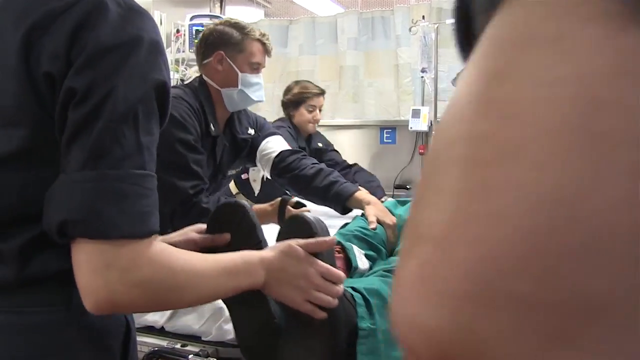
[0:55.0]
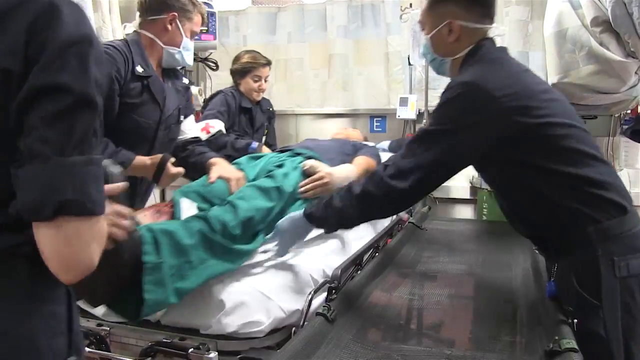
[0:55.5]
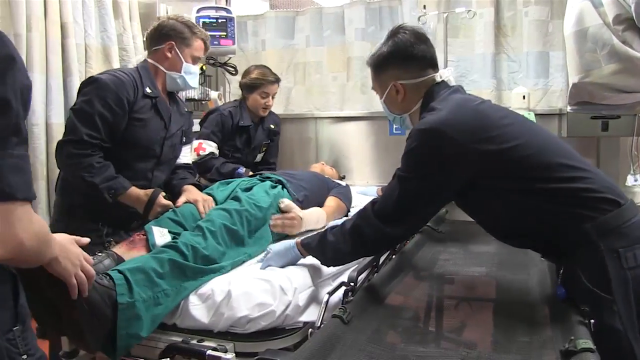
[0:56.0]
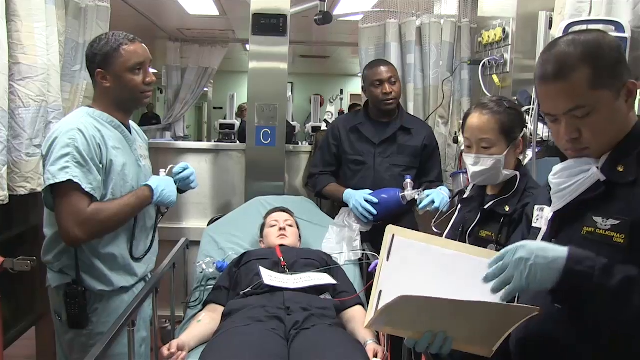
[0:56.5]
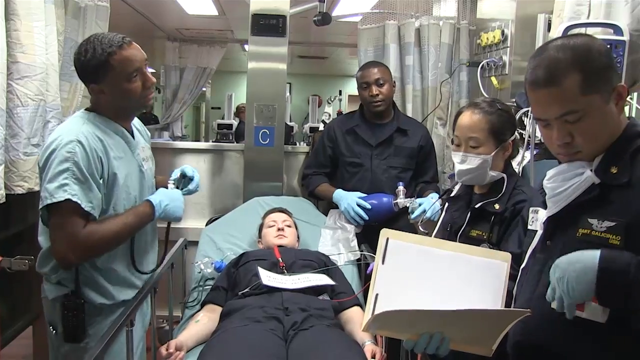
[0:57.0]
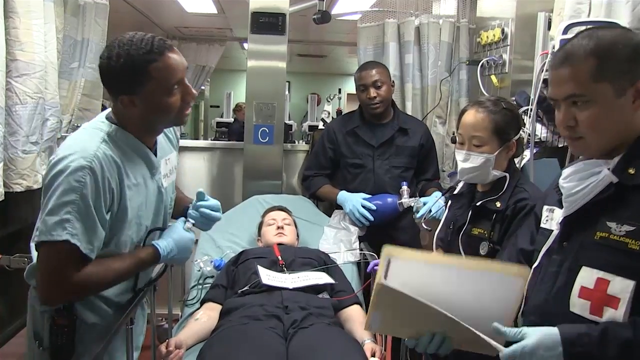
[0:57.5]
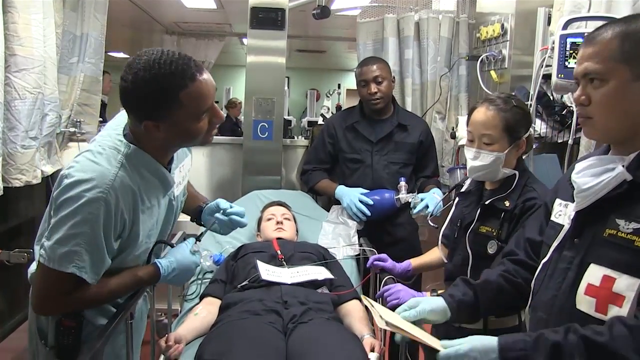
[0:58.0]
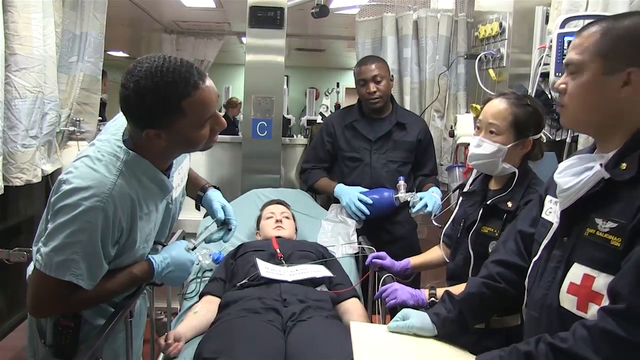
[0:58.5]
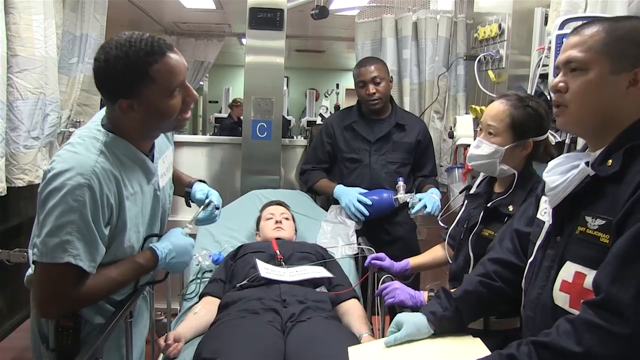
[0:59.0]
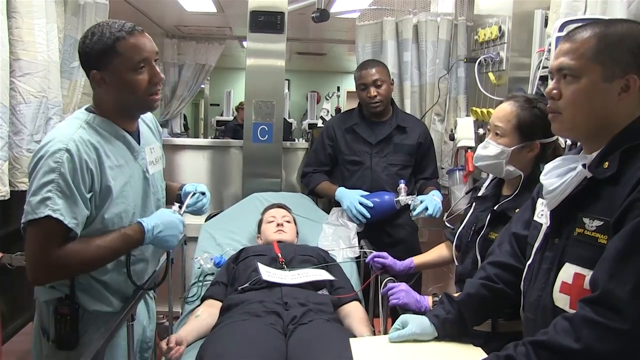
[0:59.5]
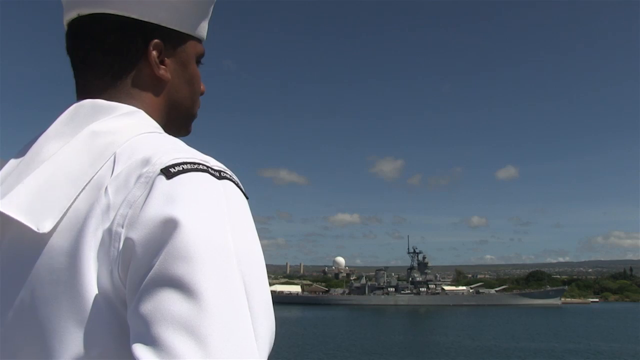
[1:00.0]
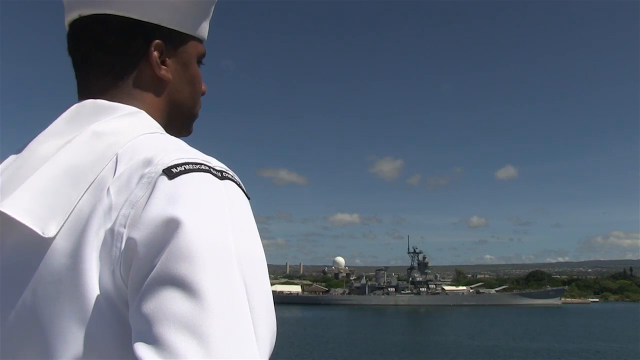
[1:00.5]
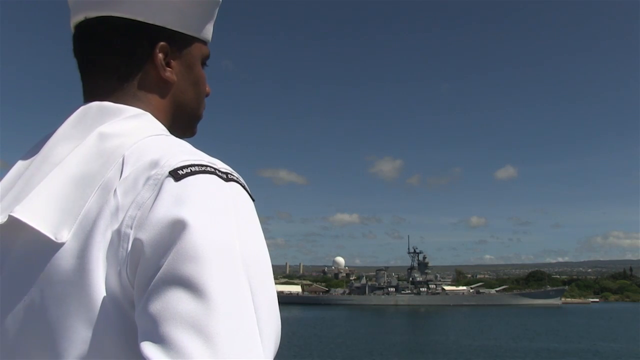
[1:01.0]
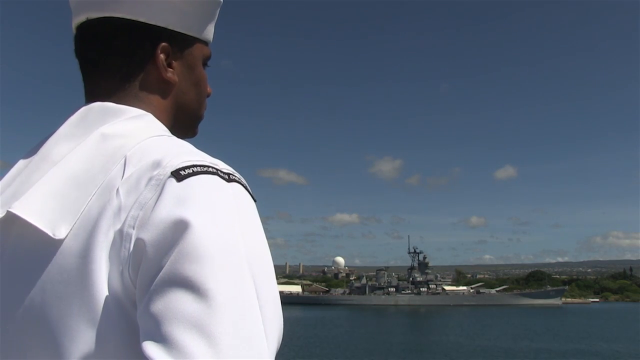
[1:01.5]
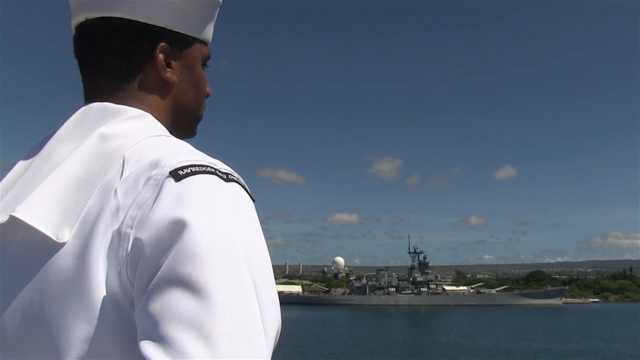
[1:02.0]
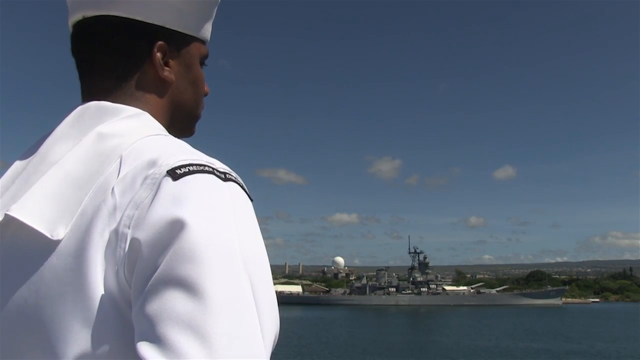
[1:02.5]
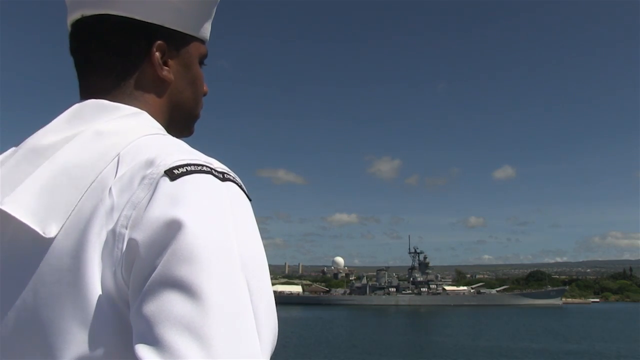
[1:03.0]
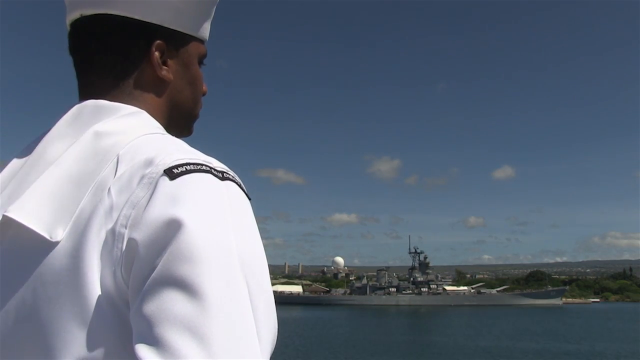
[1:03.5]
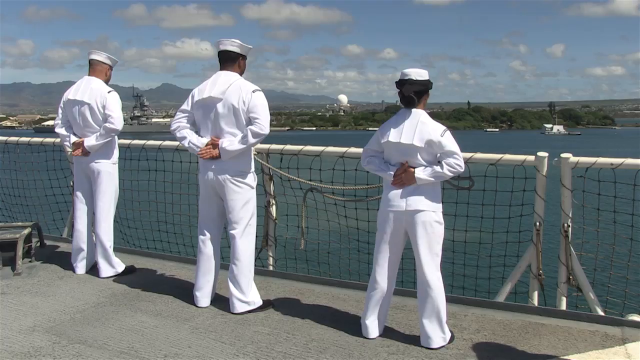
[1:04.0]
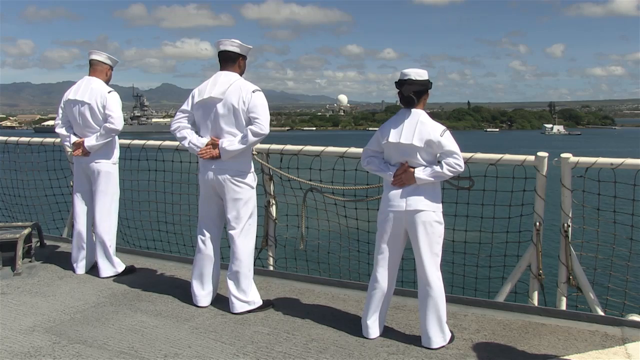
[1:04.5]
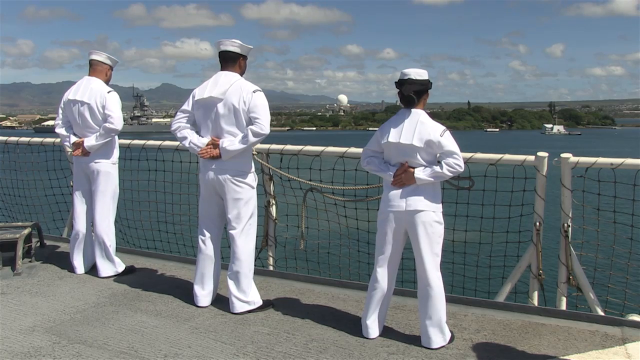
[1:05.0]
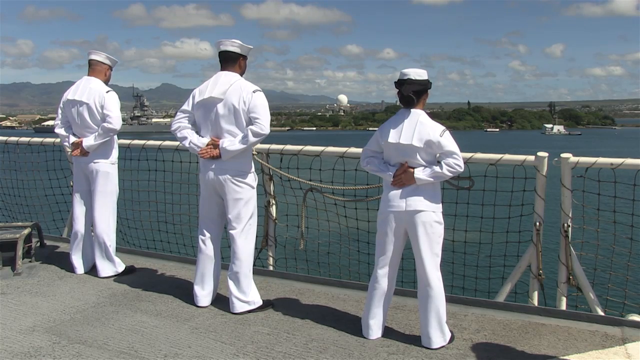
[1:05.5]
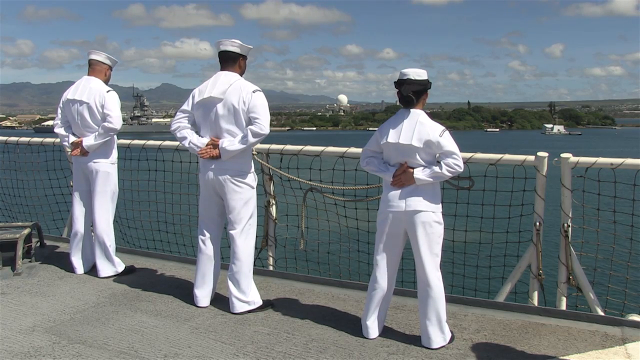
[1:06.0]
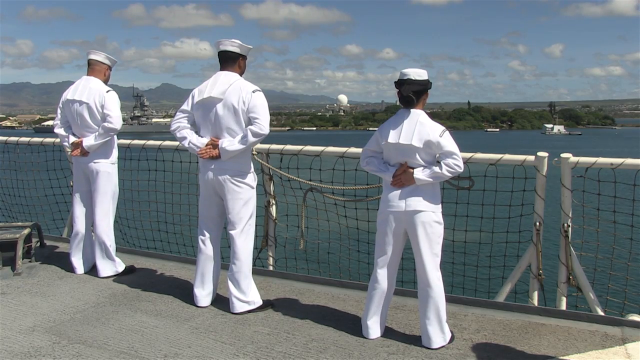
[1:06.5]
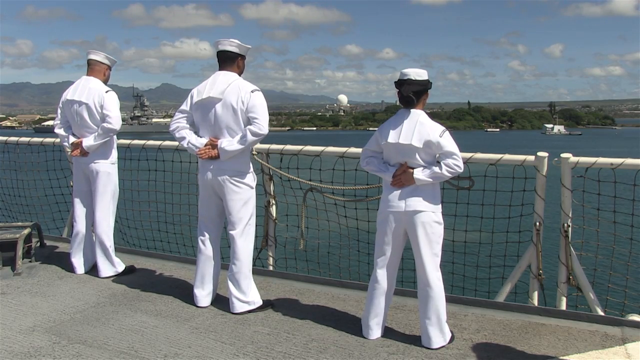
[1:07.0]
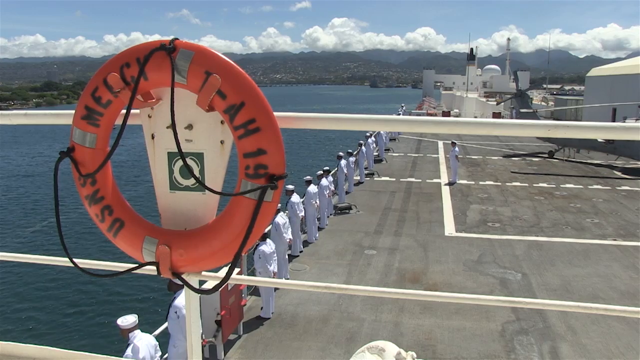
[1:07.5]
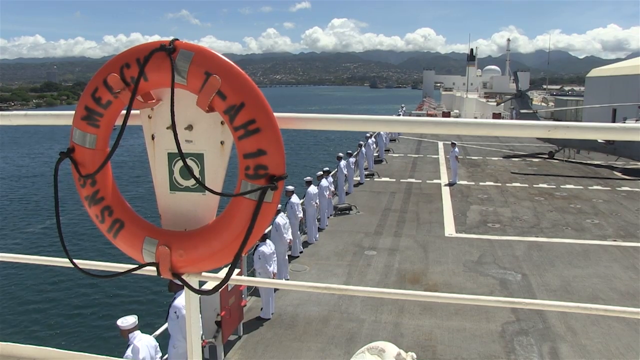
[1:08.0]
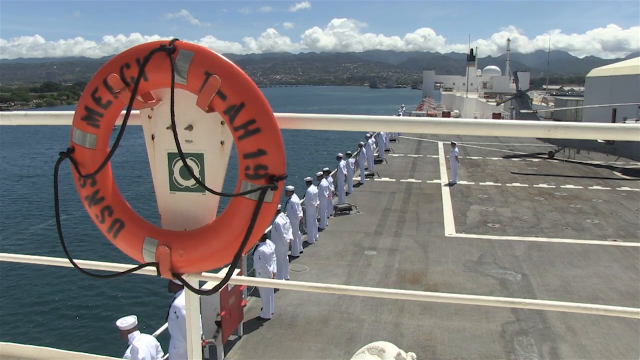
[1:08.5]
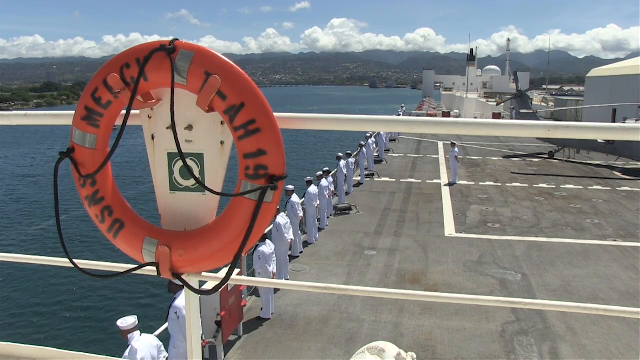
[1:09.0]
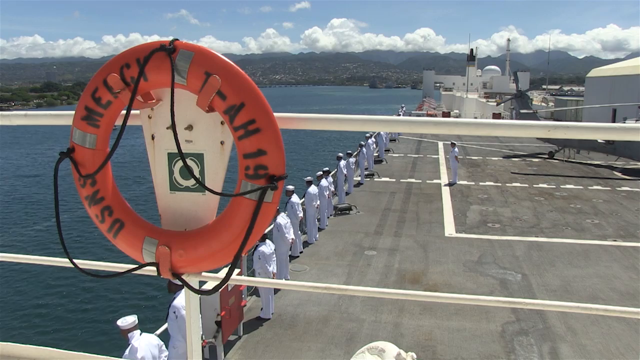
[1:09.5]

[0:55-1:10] The man has been lifted onto the gurney. The video cuts to Cortez Brown talking to other nurses and doctors around the gurney. Then three naval officers are seen from behind, in white uniforms with sailor hats, looking out over the ocean from the deck of the ship. A wider view kind of shows all the crew members, maybe about 10 of them, all standing and looking over the water toward what looks like an island. Their hands are together behind their backs with their elbows out.